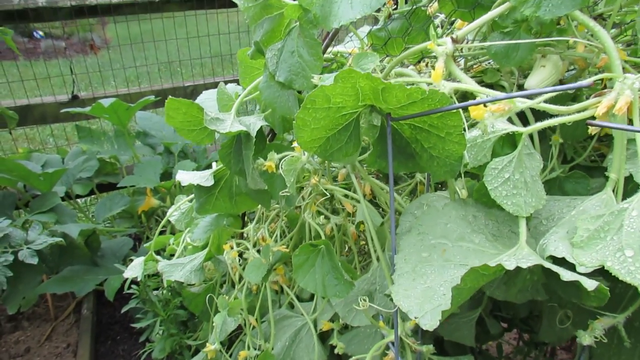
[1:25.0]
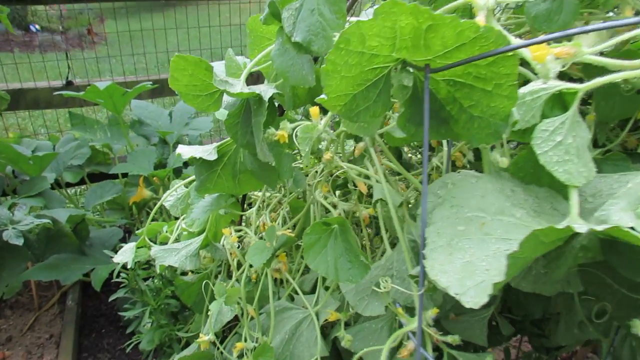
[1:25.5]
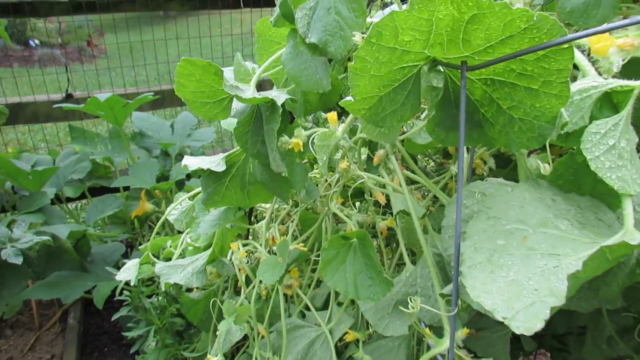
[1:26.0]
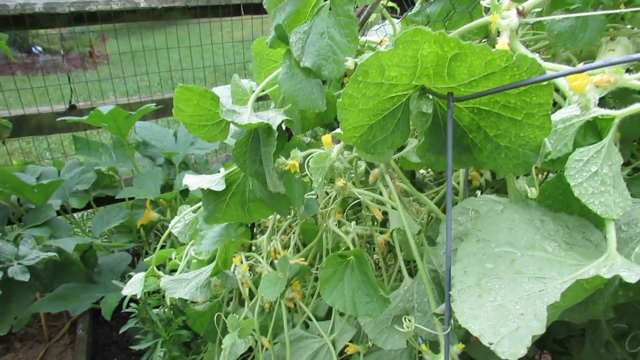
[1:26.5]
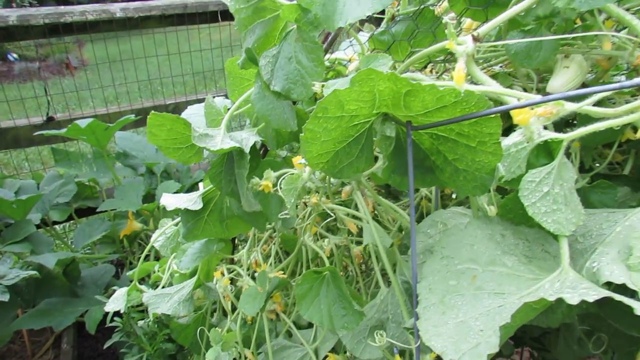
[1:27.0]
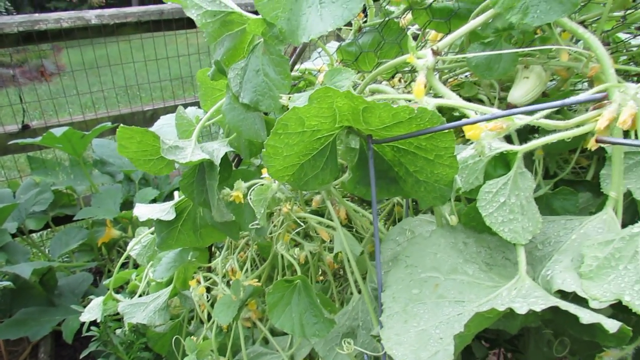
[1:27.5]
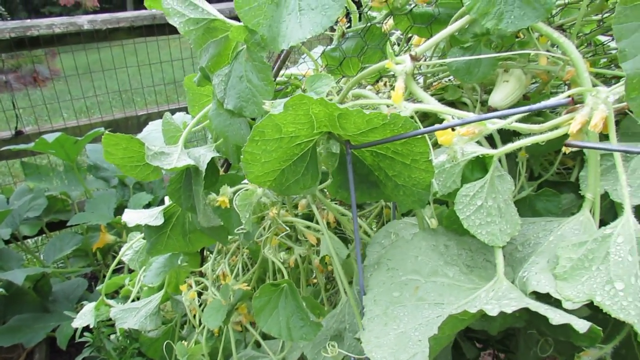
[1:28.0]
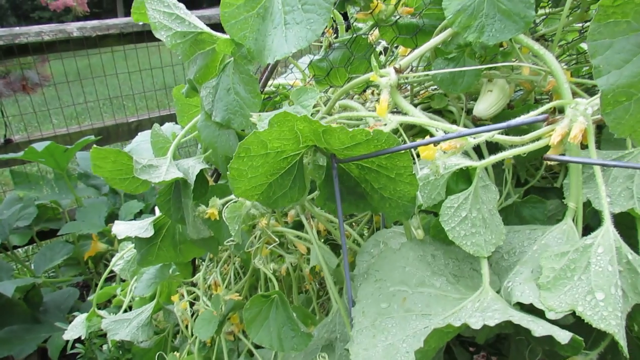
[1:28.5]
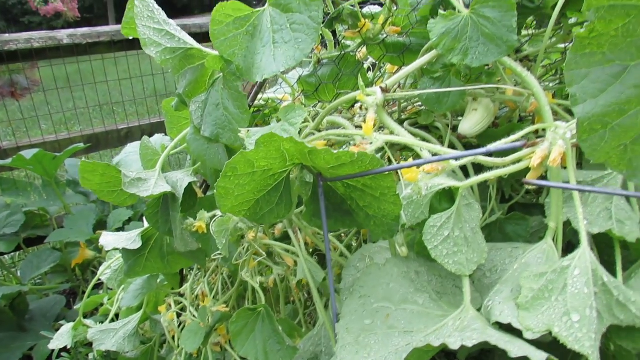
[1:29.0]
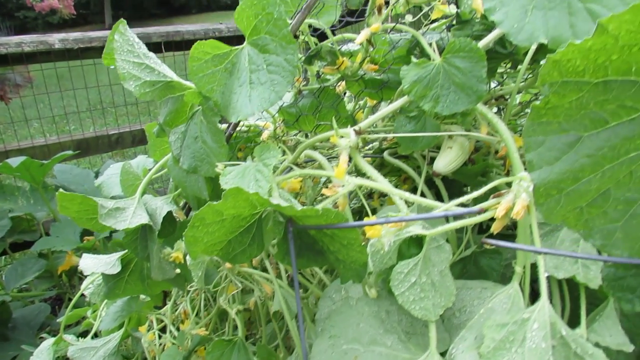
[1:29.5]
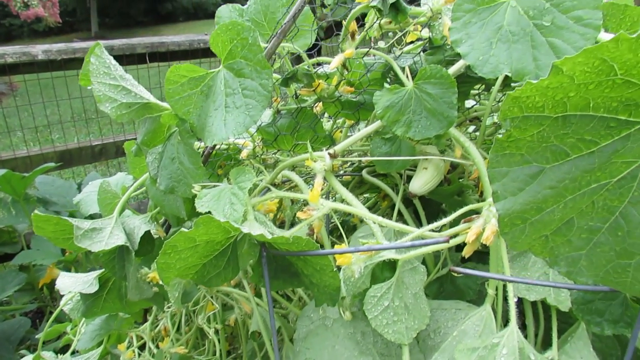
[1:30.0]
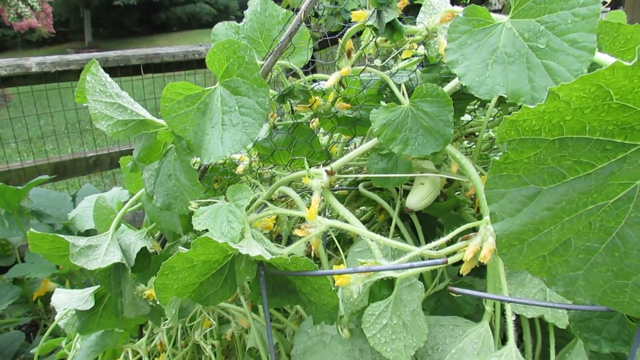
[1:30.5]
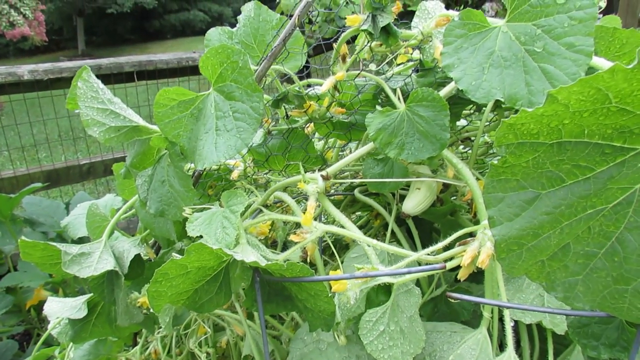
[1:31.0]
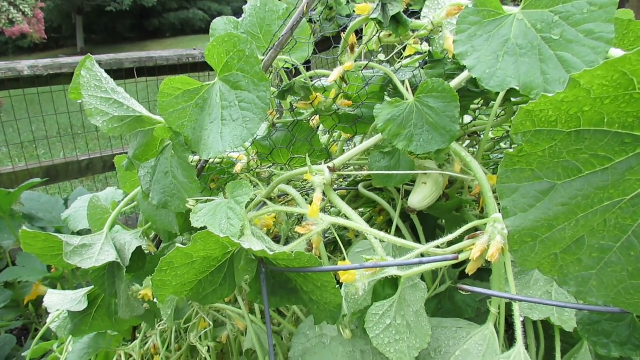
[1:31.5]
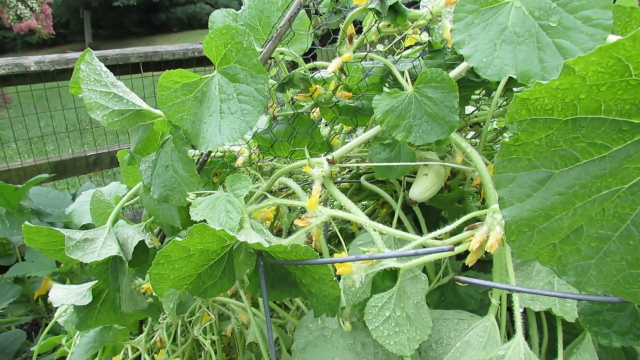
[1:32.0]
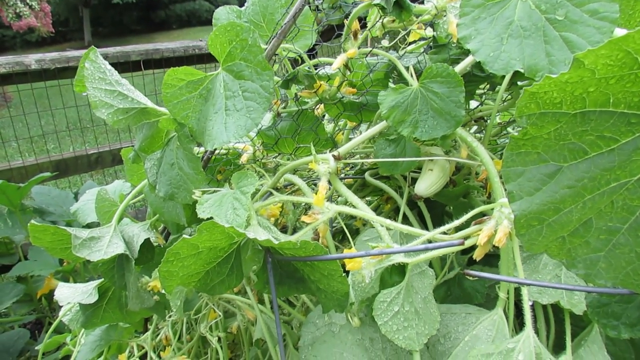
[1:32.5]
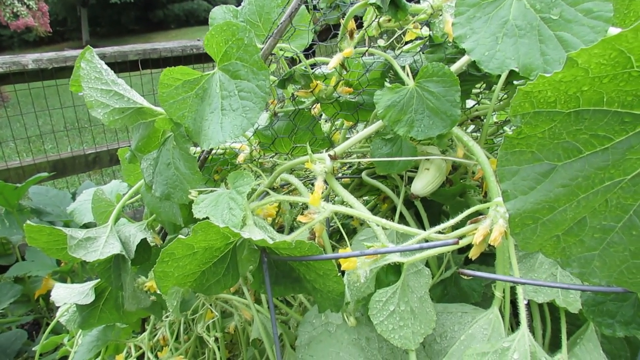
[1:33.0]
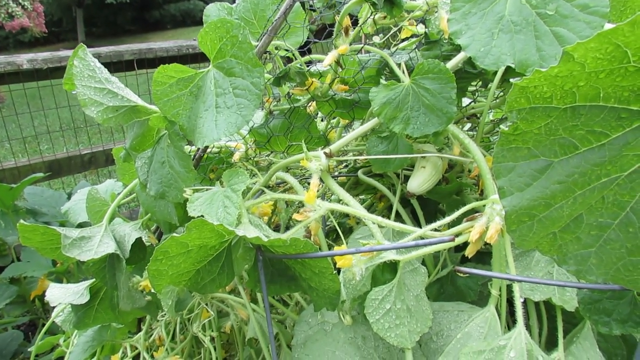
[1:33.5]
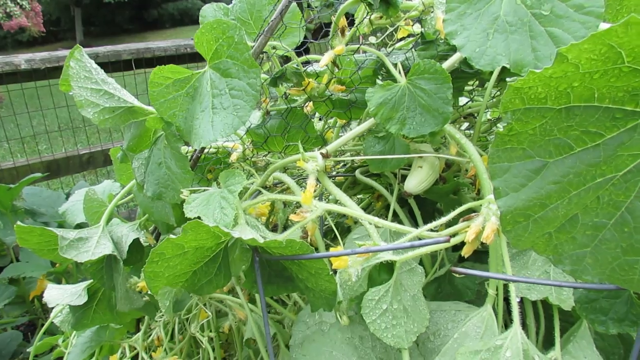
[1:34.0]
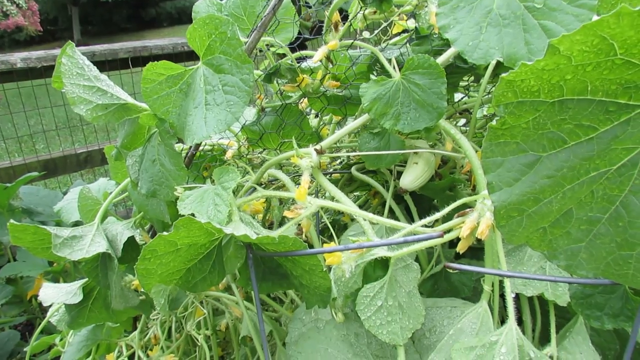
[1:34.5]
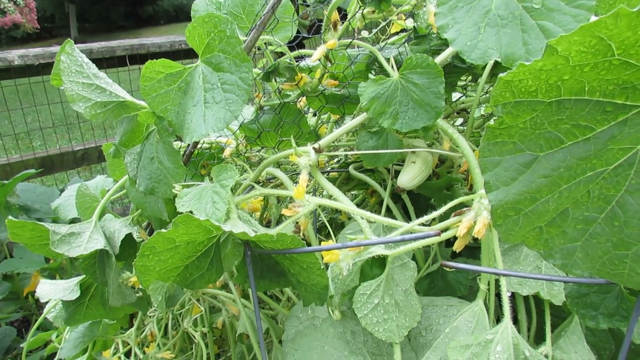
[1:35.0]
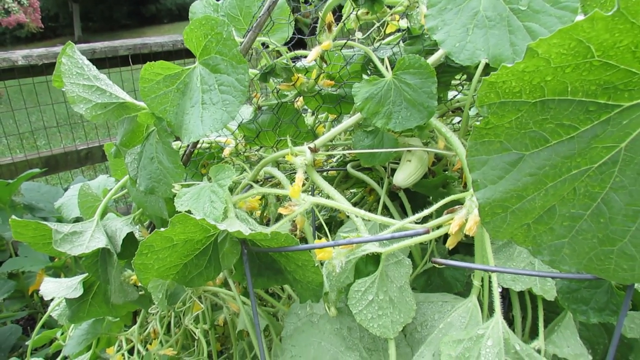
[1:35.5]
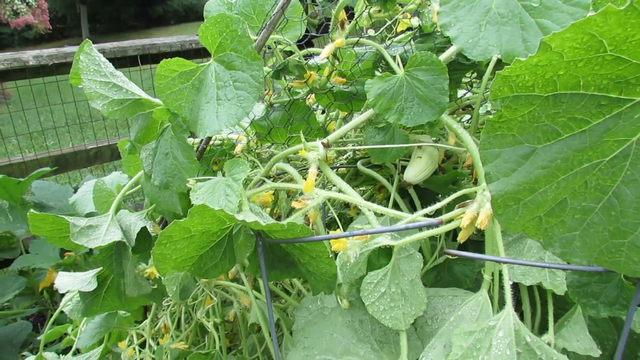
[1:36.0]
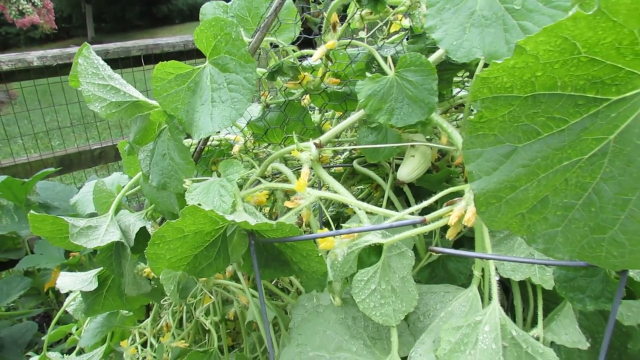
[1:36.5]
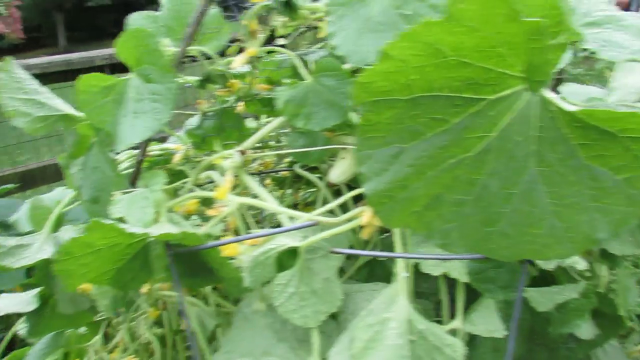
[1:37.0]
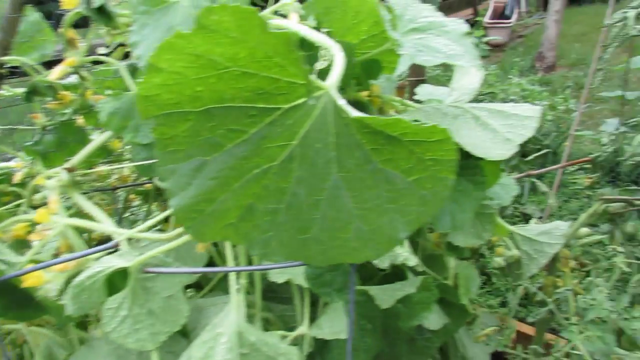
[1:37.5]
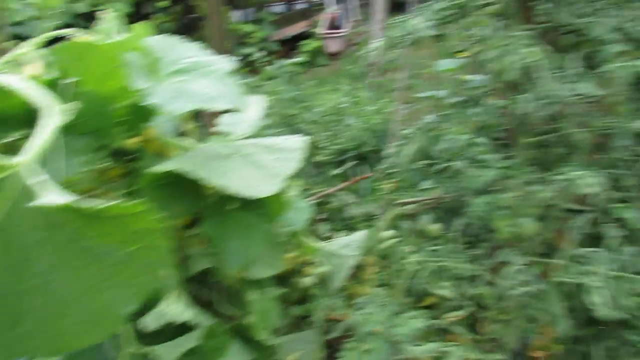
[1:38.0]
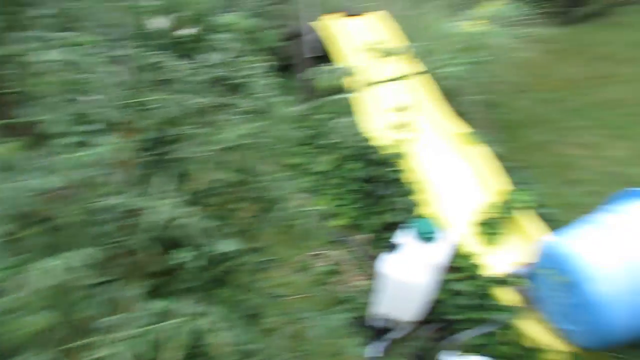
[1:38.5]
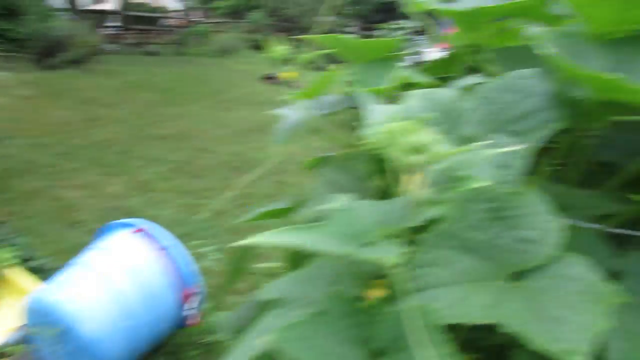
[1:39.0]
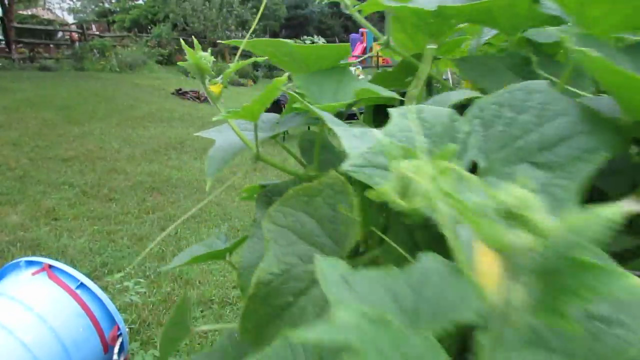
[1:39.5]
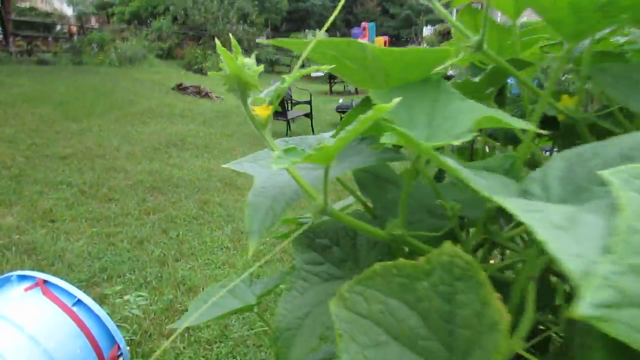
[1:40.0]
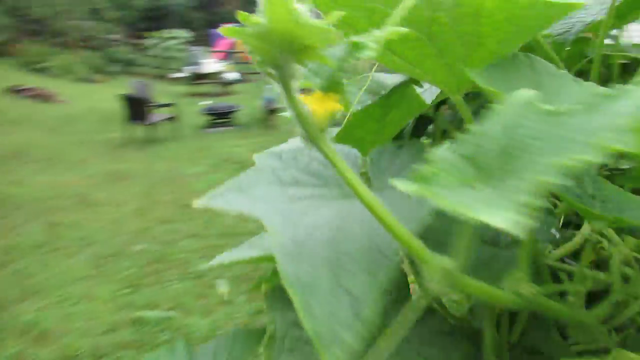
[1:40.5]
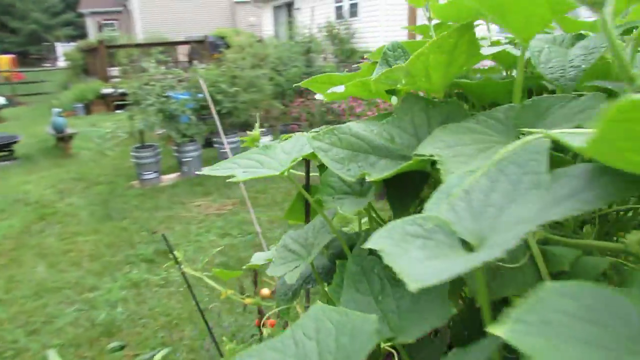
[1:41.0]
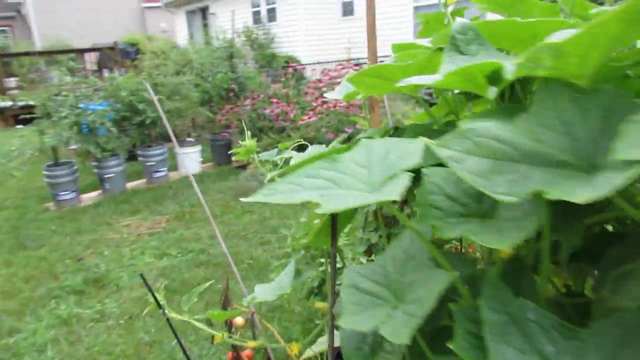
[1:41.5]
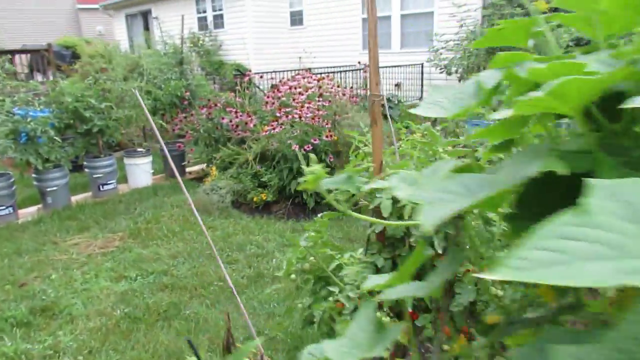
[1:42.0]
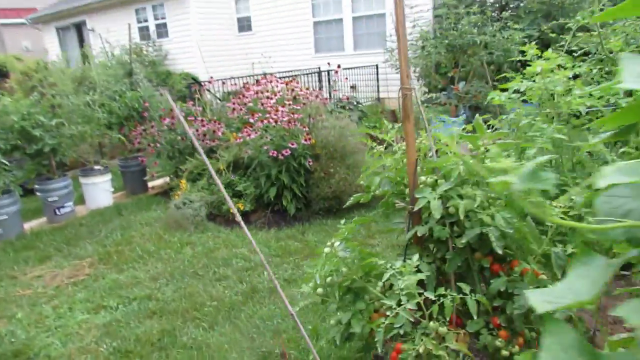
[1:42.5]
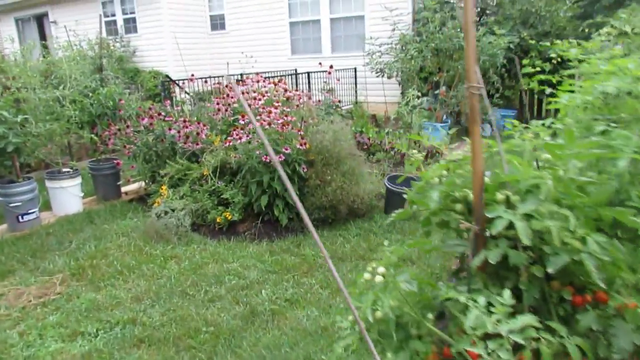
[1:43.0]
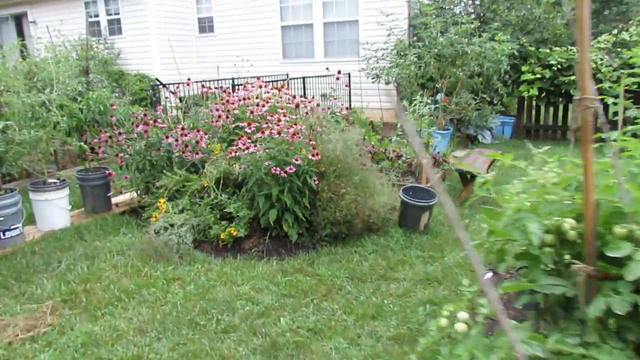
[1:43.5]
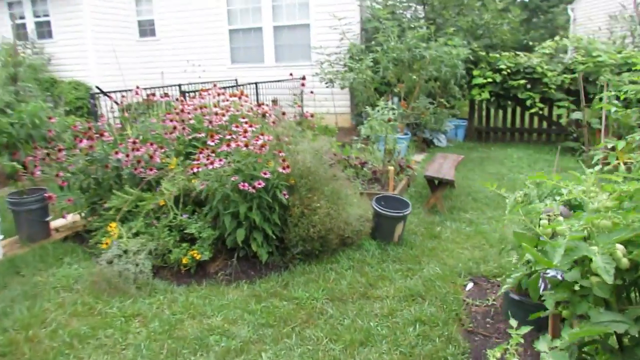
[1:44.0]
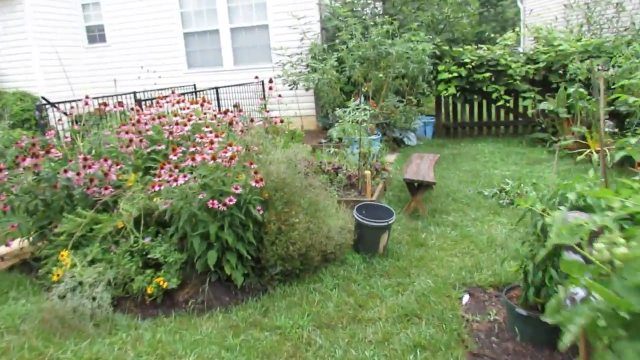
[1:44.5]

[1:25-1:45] A close-up shows the cucumber plant with small yellow flowers and green leaves, the camera so close that lots of water droplets are visible. The fence is in the background, and metal parts form a trellis for the cucumber plant to grow vertically. The camera then spins around to look at another area of the garden and walks towards other plants. A blue plastic tub with some kind of white rope handle along the side is on its side in the yard, looking as though it has been tipped over. There are some chairs and some silver pots with trees planted in them, kind of in a row along some sort of wooden plank or beam. The rest of the yard is visible, along with a white house and other plants in the background with purplish-pinkish flowers blooming.